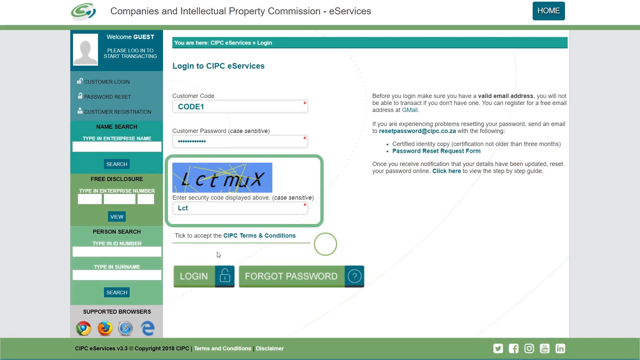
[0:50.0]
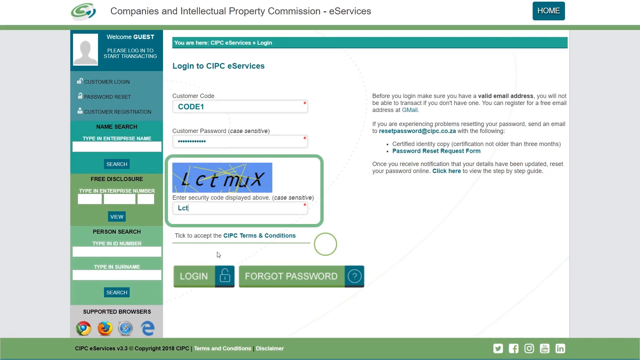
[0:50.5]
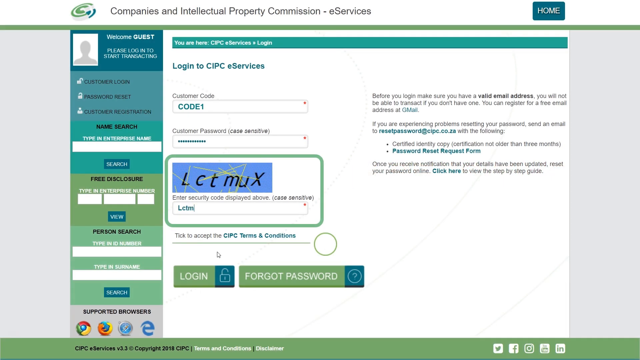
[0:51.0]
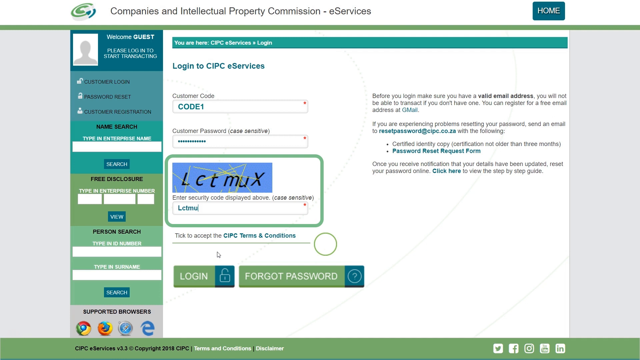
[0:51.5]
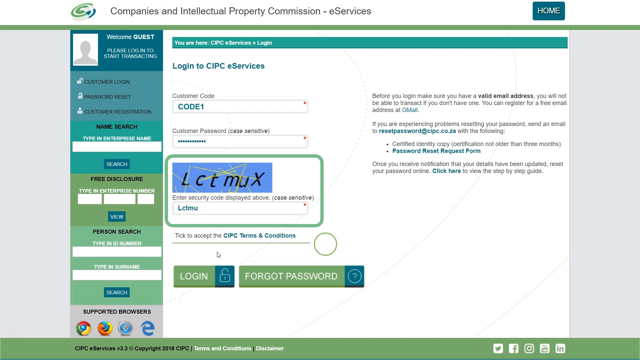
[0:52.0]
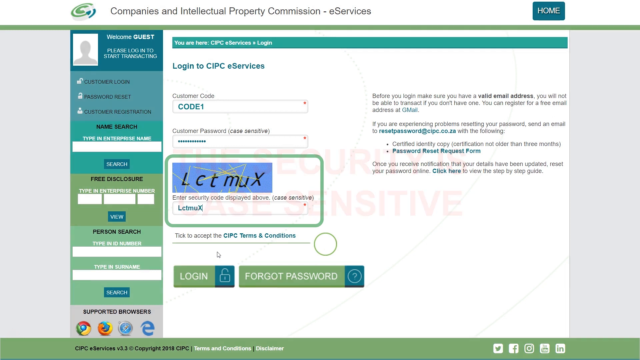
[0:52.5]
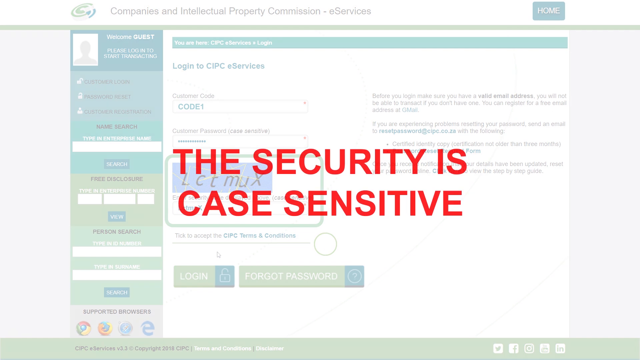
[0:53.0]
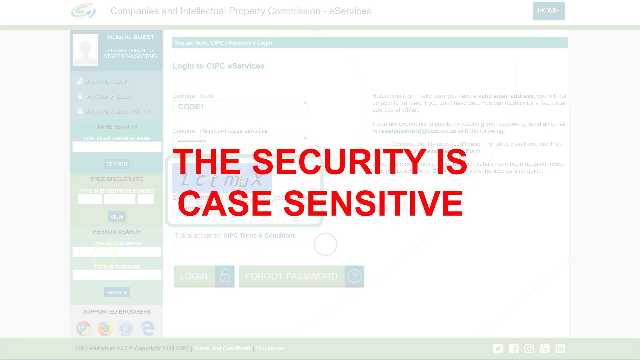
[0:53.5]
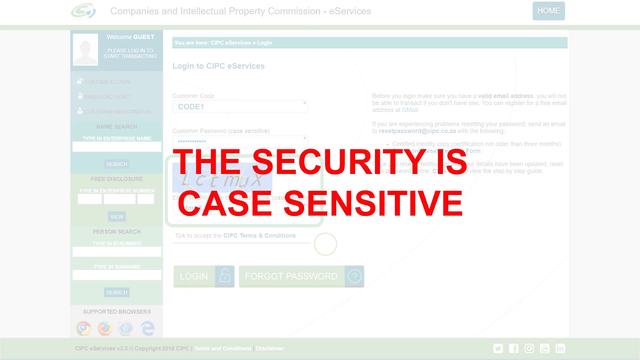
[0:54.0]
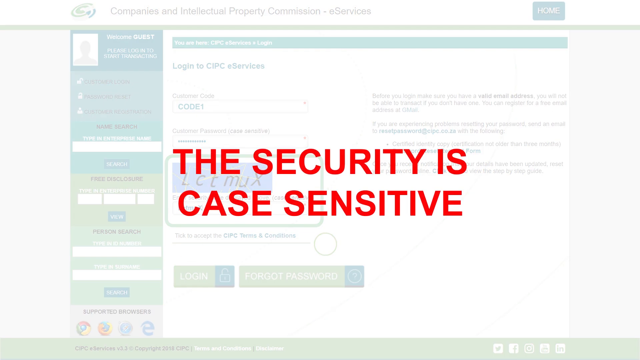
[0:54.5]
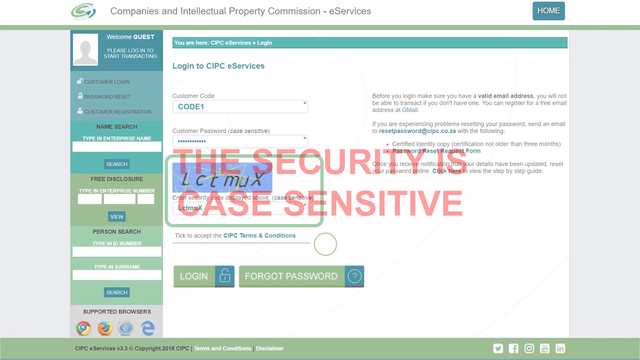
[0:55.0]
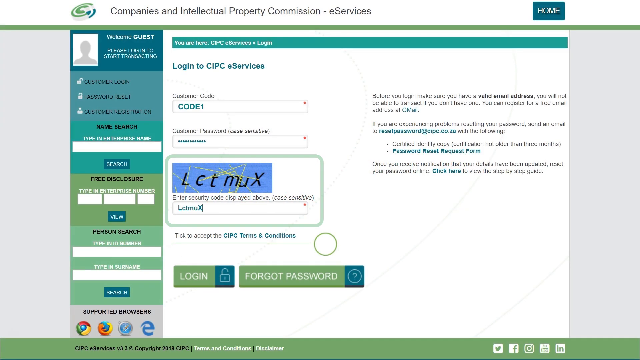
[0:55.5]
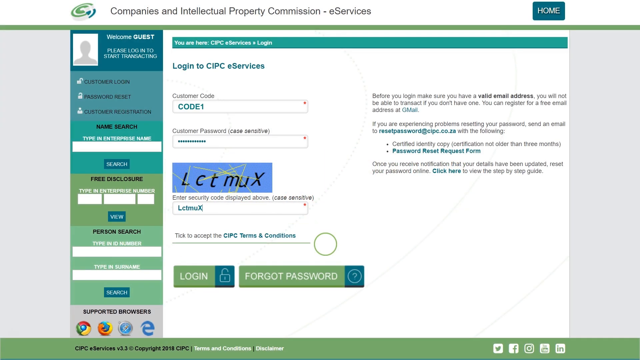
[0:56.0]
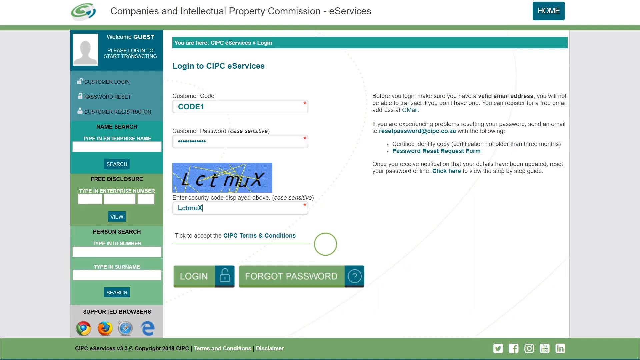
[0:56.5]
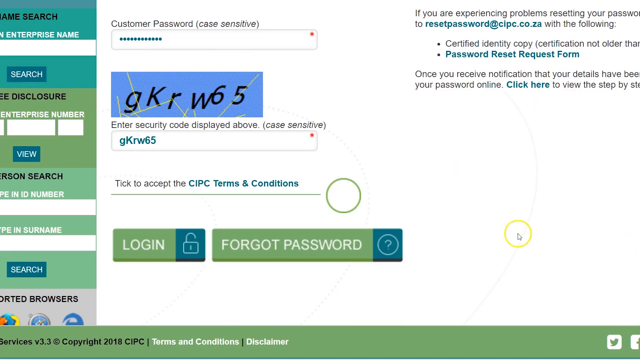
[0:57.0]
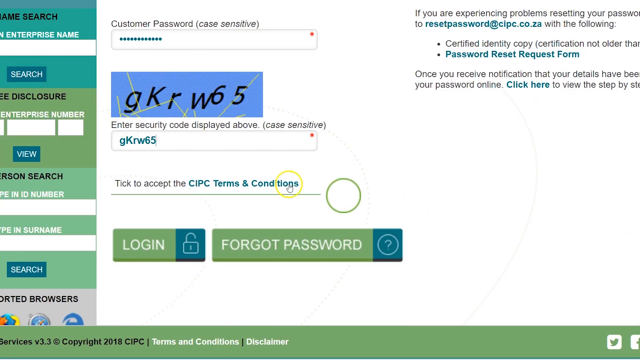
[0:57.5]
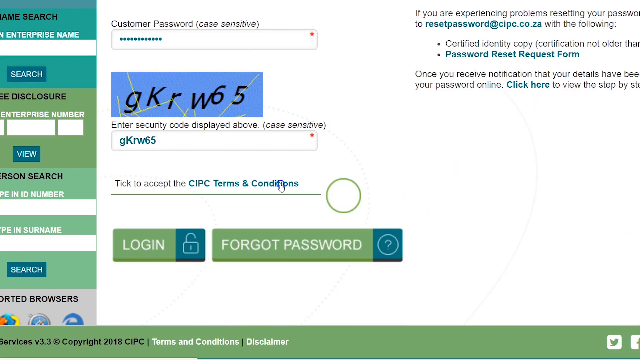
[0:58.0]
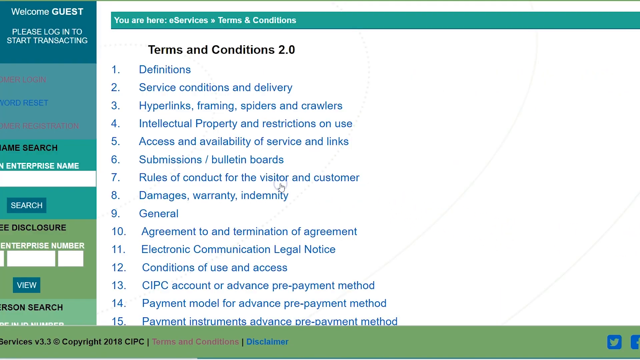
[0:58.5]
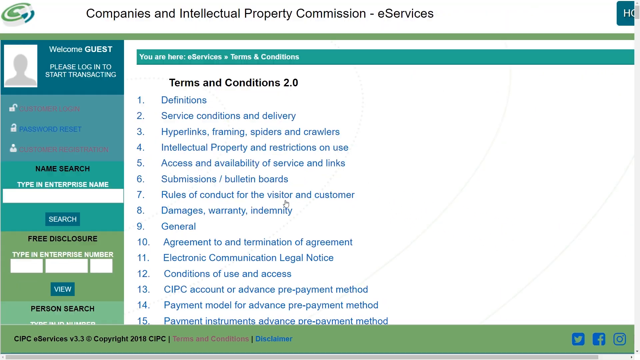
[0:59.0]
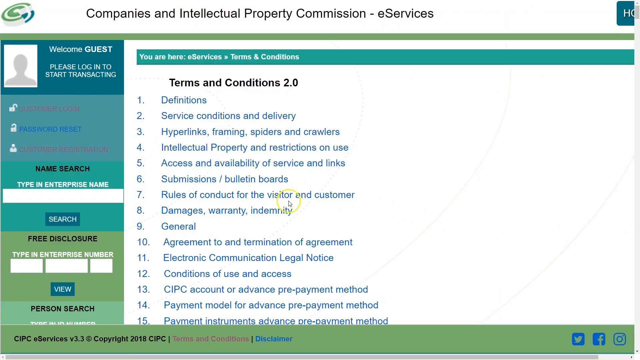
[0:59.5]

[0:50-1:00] A colorful informational sheet is shown while somebody types something in the search bar. Suddenly the page fades and the phrase "the security is case sensitive" appears on the screen in red, bold capital letters. The view then returns to the page, which jumps and turns. A code is in a box, and another code, made up entirely of letters, is in the search bar, highlighted inside a blue box. On the right-hand side are sentences, some highlighted in blue. On the left side is a very colorful border containing information, with somebody's profile in the upper left-hand corner.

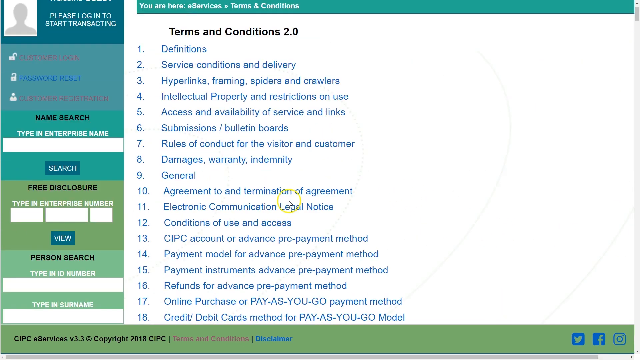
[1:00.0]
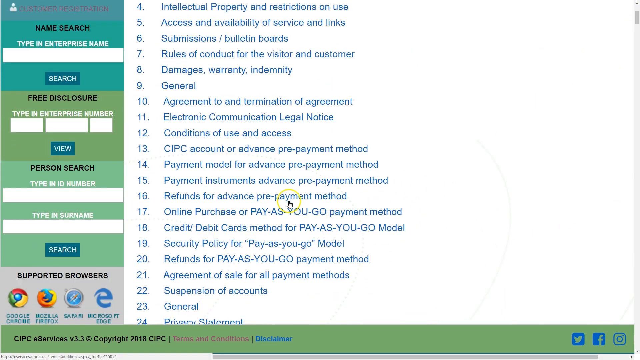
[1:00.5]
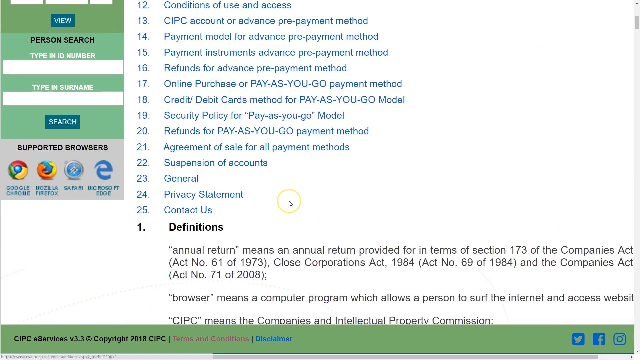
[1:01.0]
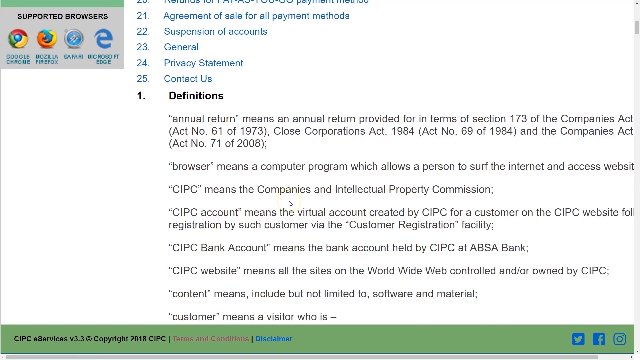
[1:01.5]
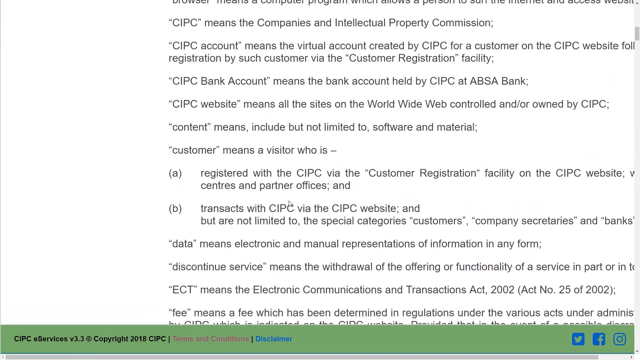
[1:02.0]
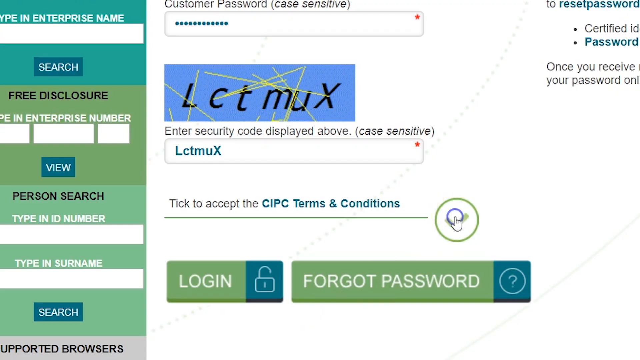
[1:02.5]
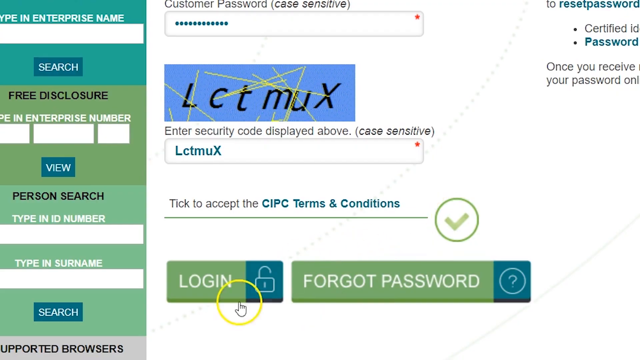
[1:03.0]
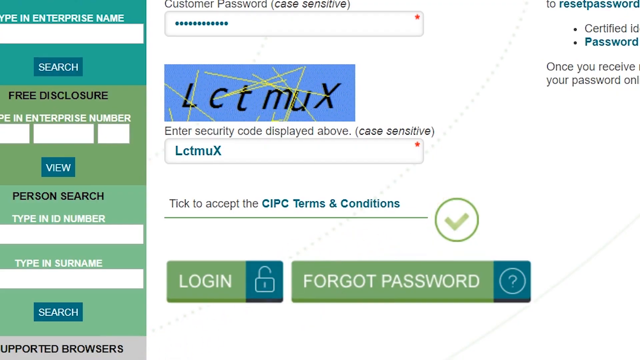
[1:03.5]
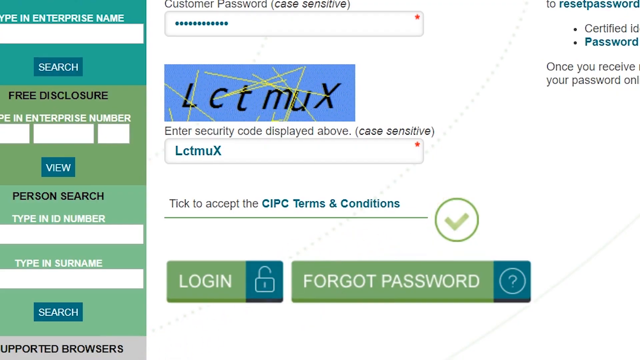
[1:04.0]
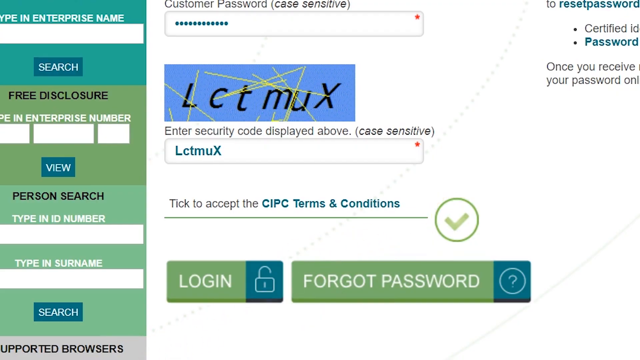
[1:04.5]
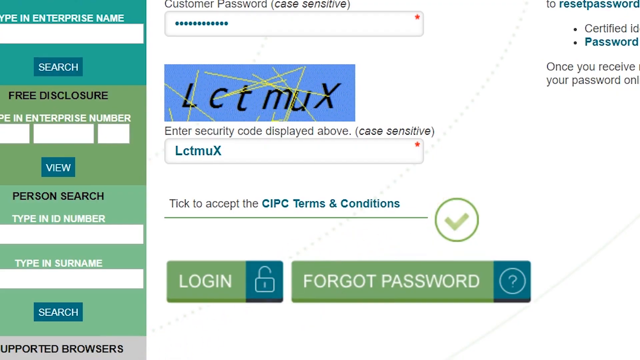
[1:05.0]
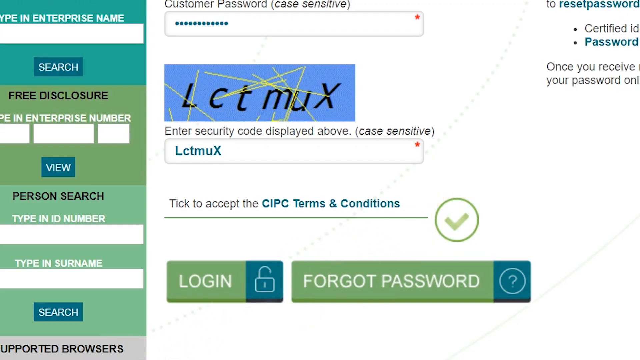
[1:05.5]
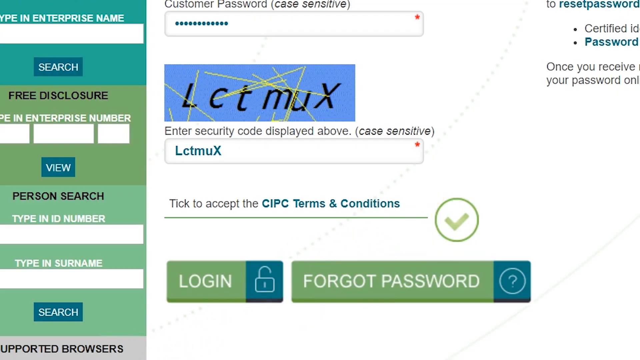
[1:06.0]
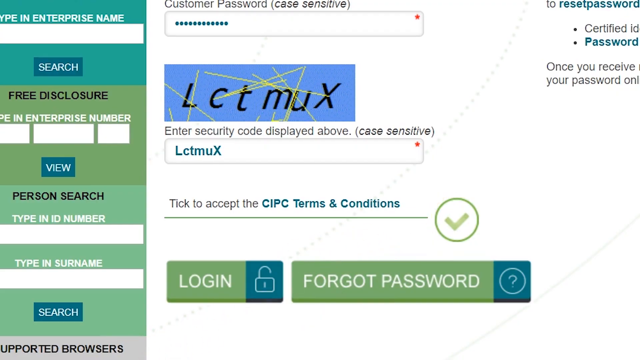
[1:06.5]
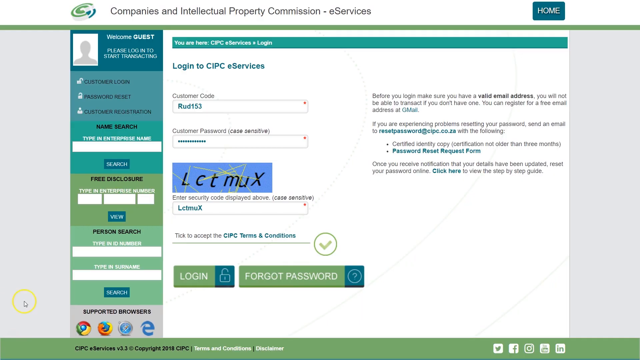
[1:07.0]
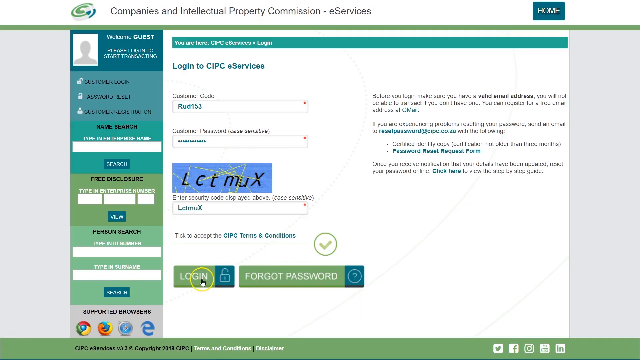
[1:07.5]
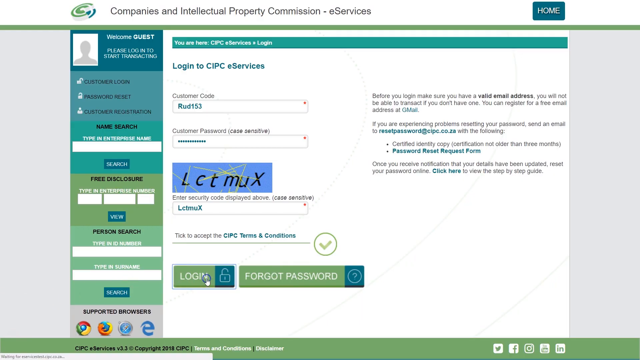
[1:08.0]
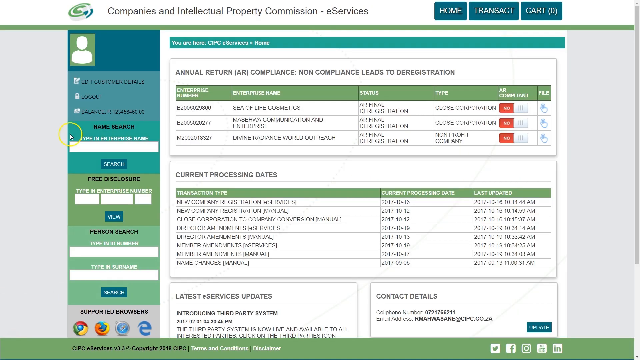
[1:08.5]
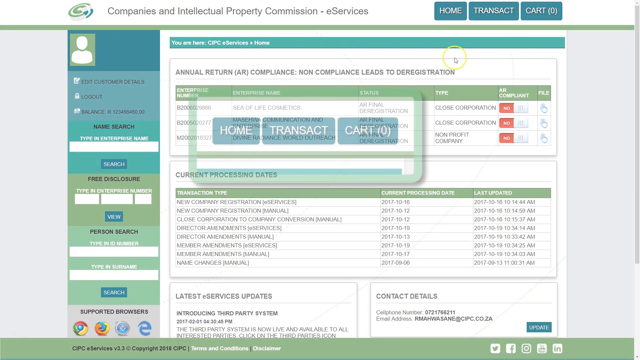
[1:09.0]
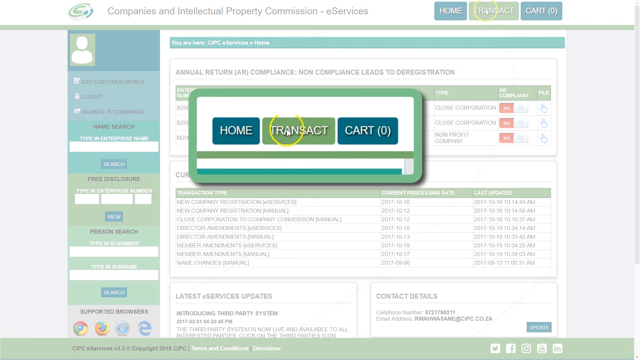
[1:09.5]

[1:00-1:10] Information scrolls up the page as a cursor moves around and somebody changes pages very quickly. One page has a time-sensitive code as well as another code in a smaller box. Scrolling up reveals the sources of information that have been used. A pop-up appears and the center choice is clicked. The cursor has a yellow circle around it, making it easier to see, and it keeps moving around. Text reads "tick to accept" and "tick to accept the conditions." A green check mark in a circle appears on the page and stays fairly stationary while the page scrolls very fast.